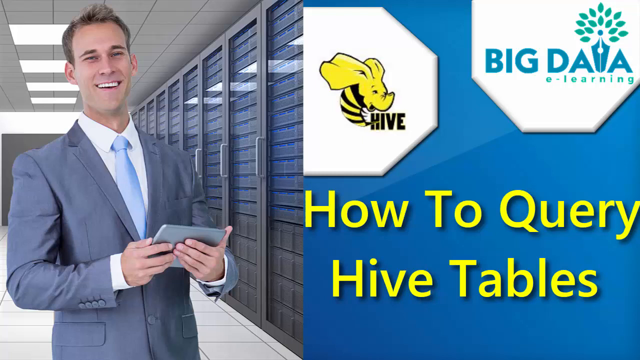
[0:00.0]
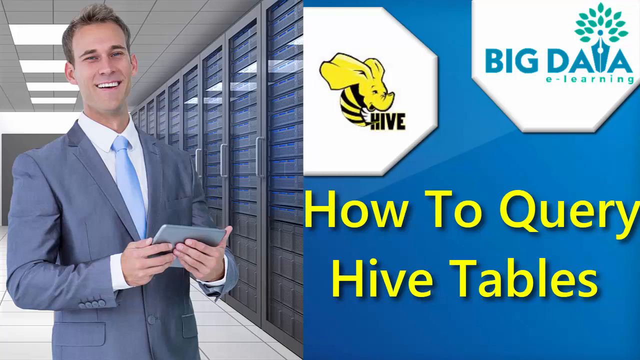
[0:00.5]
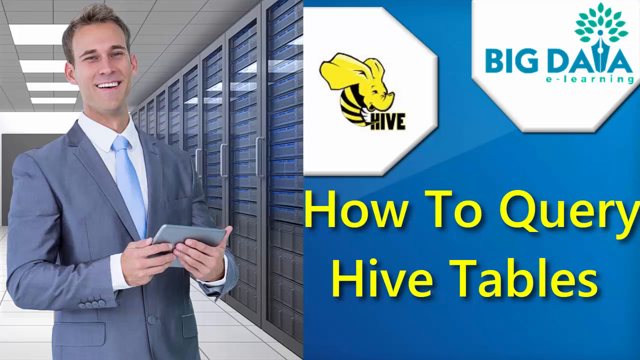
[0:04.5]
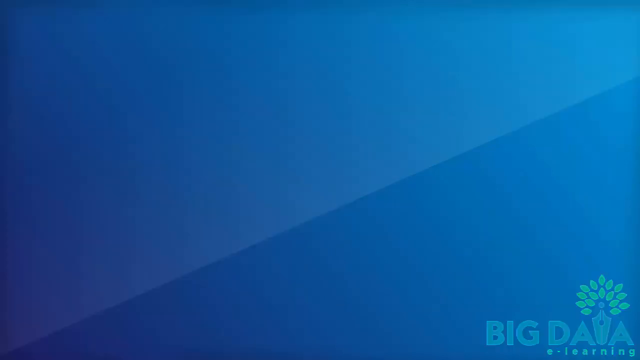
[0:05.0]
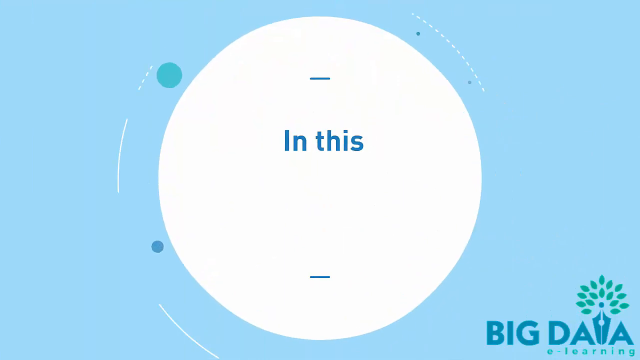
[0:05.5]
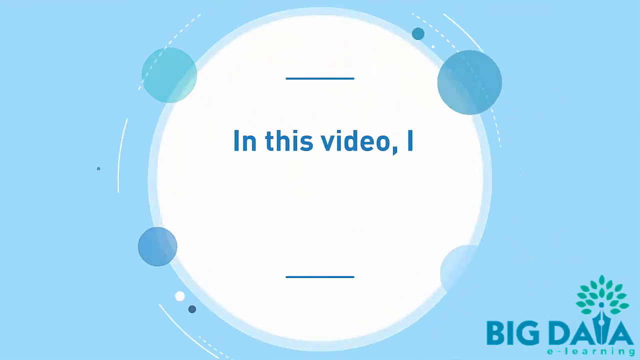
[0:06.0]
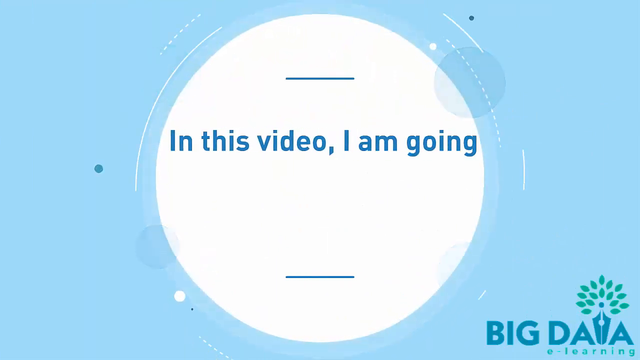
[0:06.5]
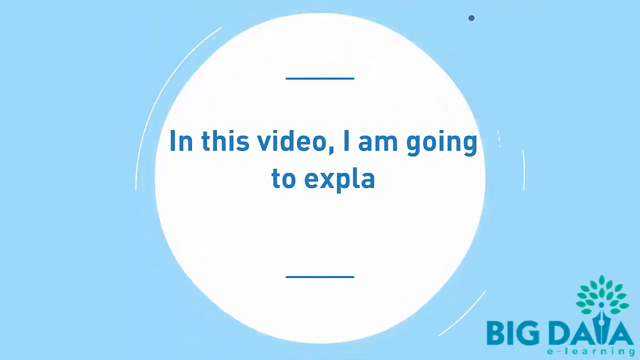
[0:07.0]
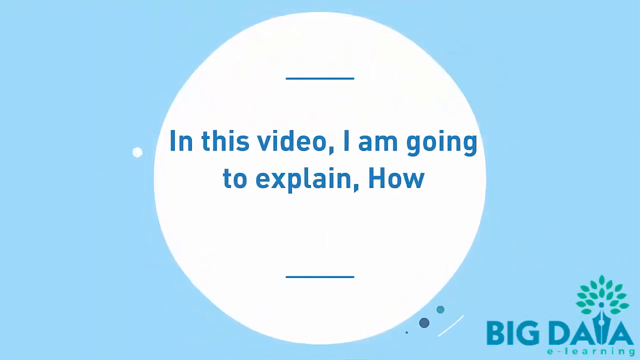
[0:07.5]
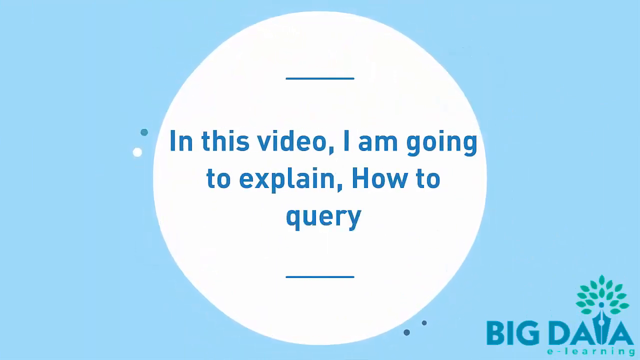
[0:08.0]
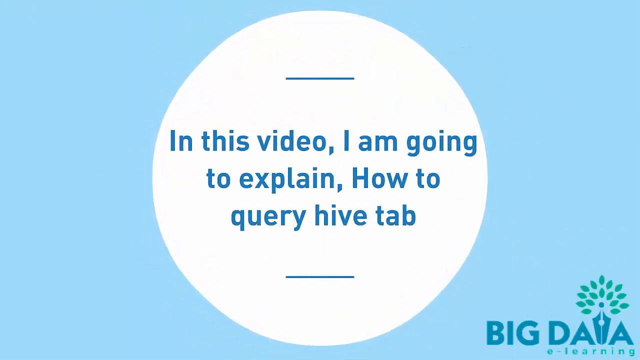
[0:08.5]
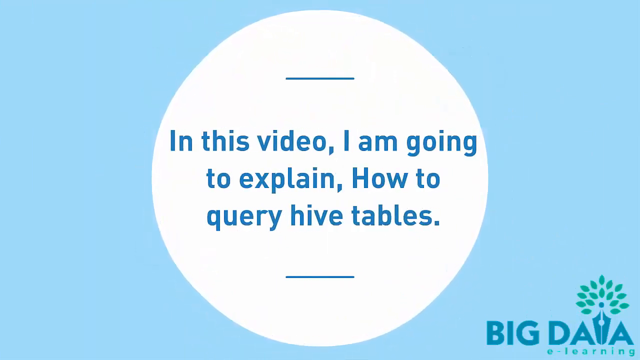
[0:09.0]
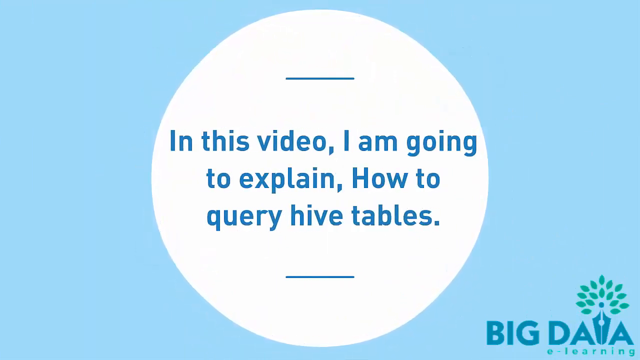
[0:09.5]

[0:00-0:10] The video begins with a title page showing a photograph of a man standing on the left side. He wears a gray jacket, a light blue tie and a white shirt, holds papers in his hand and smiles at the camera. Behind him on the right are rows of glass-covered cabinets that look like they might have computer components in them. On the right side of the screen is the title card, which says "How to Query Hive Tables." Above this on the left is a logo that says "Hive" and shows a yellow and black creature with an elephant head and a bee body. On the right side is "Big Daia E-Learning," where the "i" looks like the trunk of a tree. The screen then changes to a graphic with a white circle in the center, and text appears in the center as if being typed: "In this video, I am going to explain, How to query hive tables."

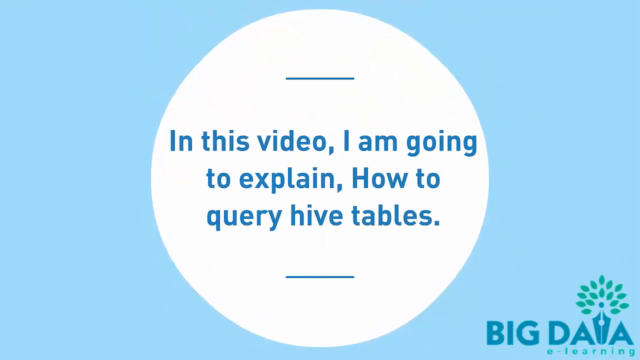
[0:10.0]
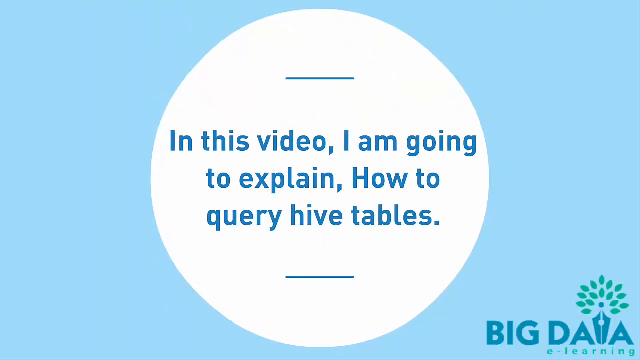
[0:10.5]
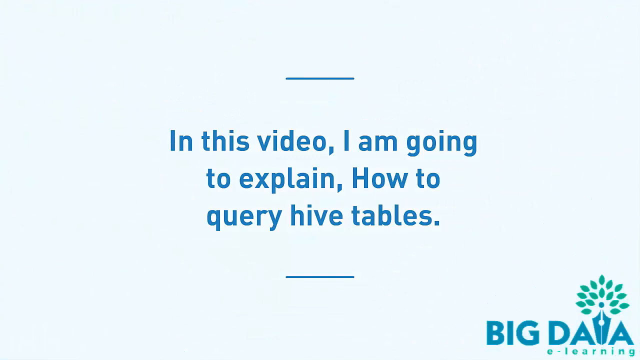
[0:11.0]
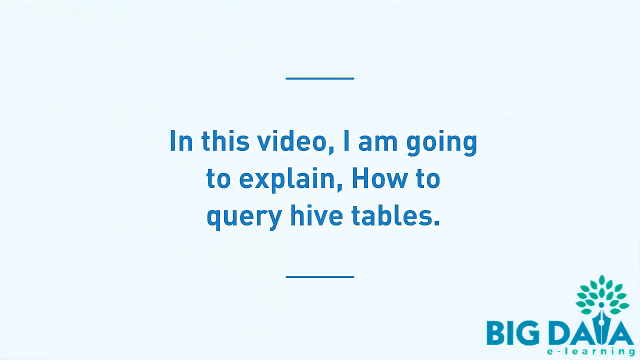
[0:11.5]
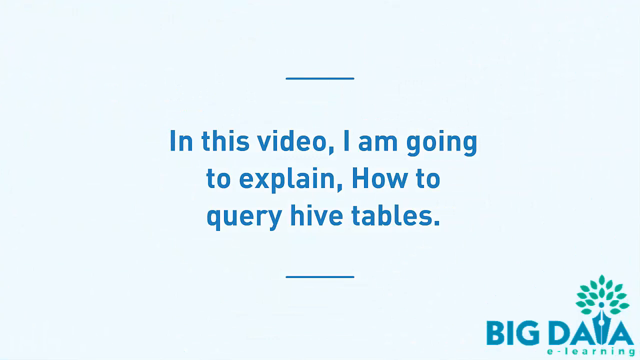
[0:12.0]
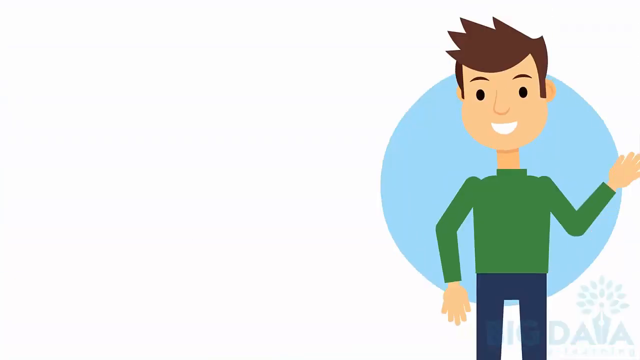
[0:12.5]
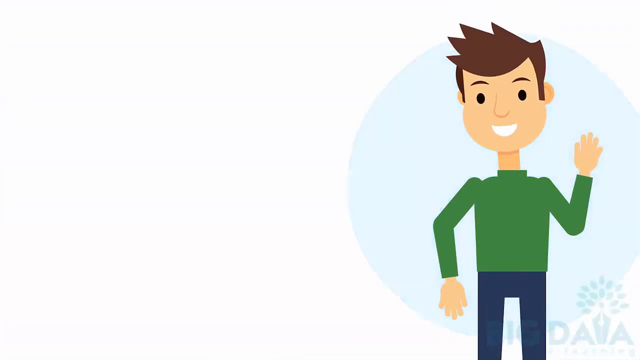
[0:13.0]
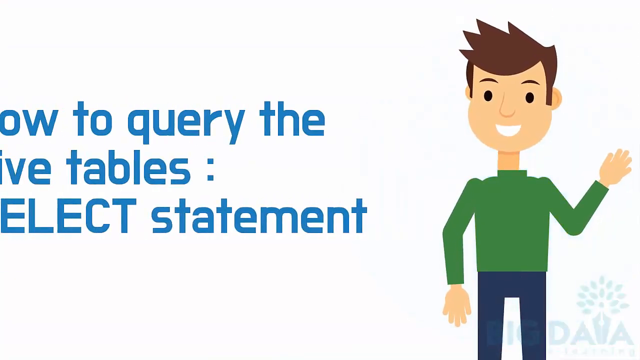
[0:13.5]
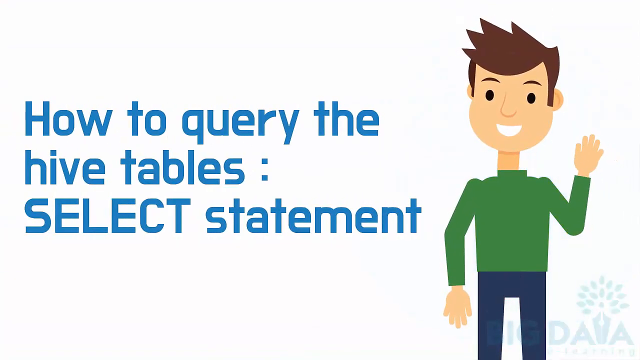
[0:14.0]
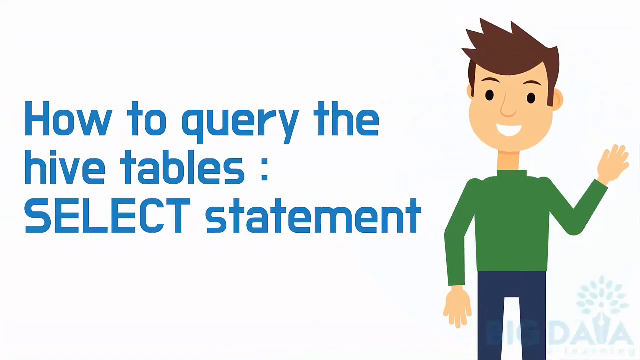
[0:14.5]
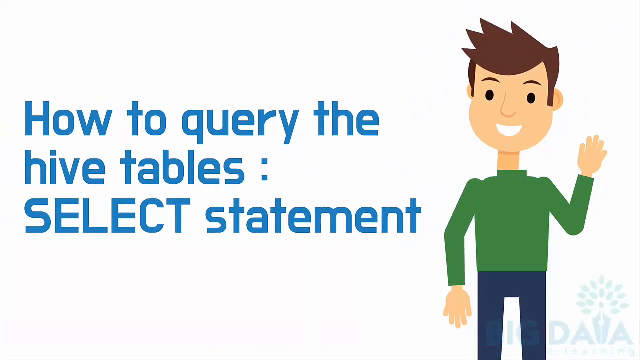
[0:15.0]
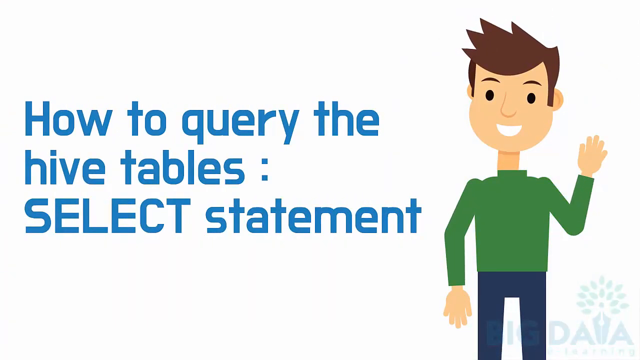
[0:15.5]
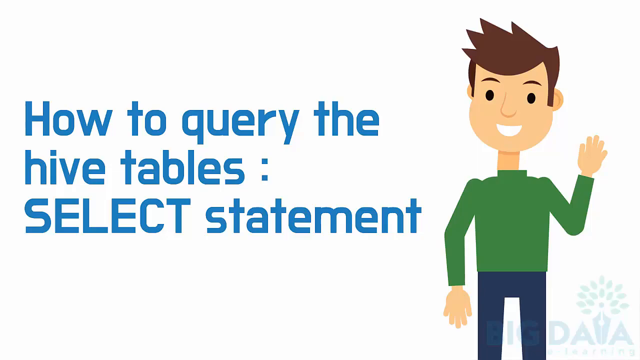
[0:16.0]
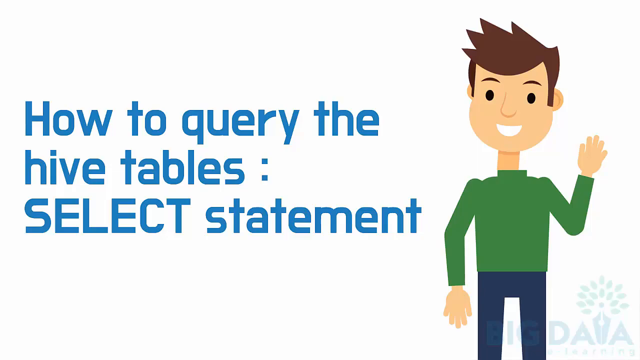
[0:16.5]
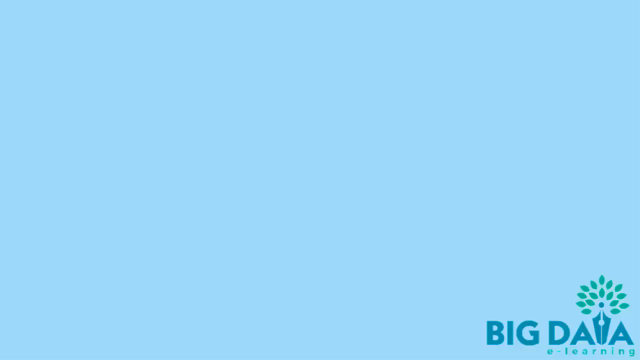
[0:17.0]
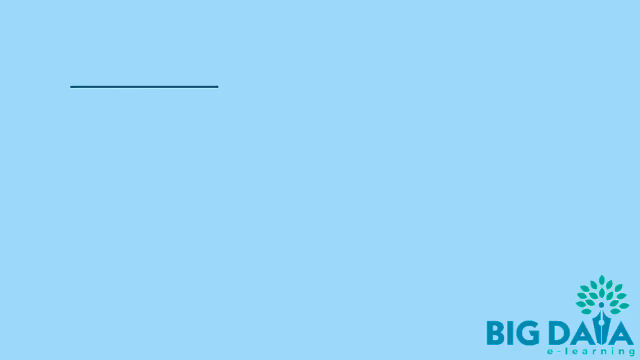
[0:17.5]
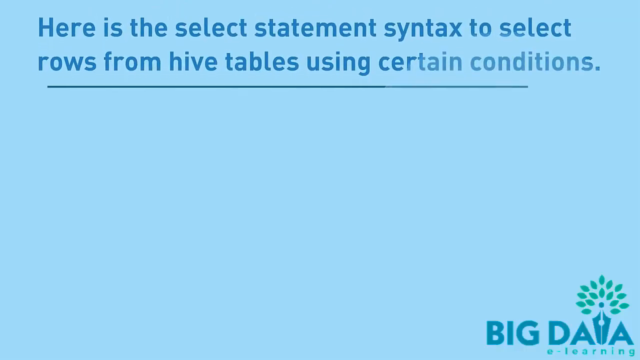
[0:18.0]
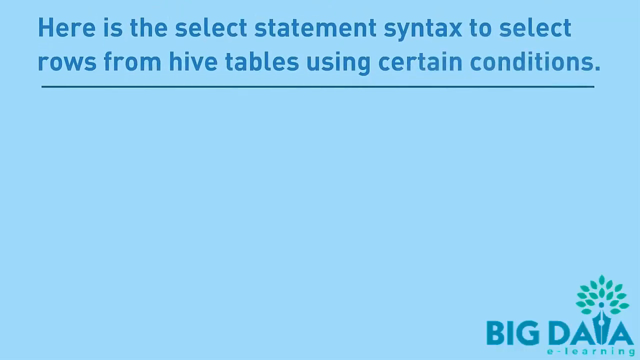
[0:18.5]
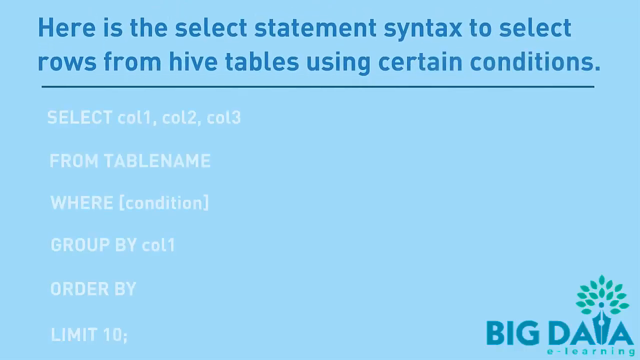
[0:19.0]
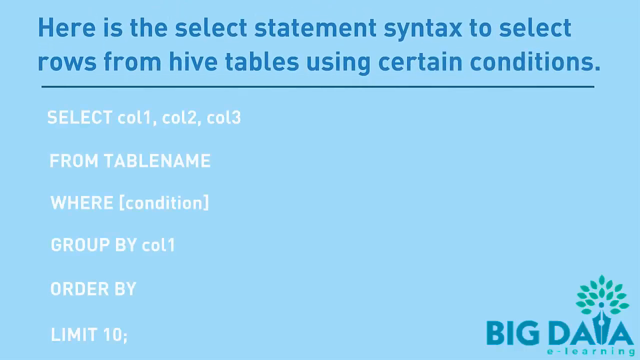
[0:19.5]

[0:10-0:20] A sequence of screens explains the process of querying hive tables. A graphic shows a white circle with text in the center reading "In this video, I am going to explain, How to query hive tables." This fades, and an animated man stands on the right side of the screen, waving with his left hand. Next to him, text appears that says "How to query the hive tables: SELECT statement." The scene changes to another screen with text at the top reading "Here is the select statement syntax to select rows from hive tables using certain conditions." Below this, text appears in lines reading "SELECT col1, col2, col3", "FROM TABLENAME", "WHERE (condition)", "GROUP BY col1" and "ORDER BY".